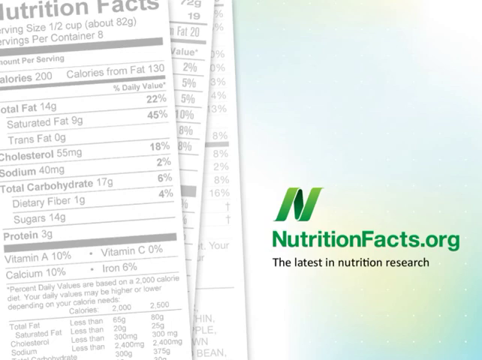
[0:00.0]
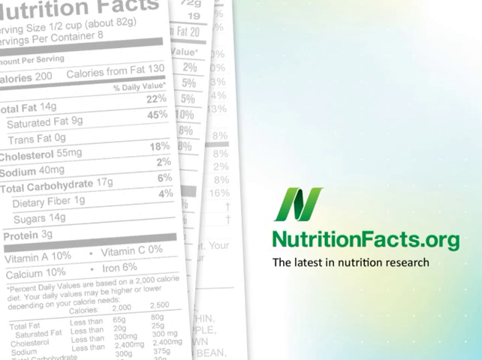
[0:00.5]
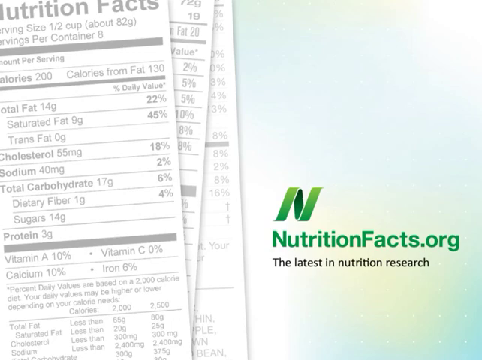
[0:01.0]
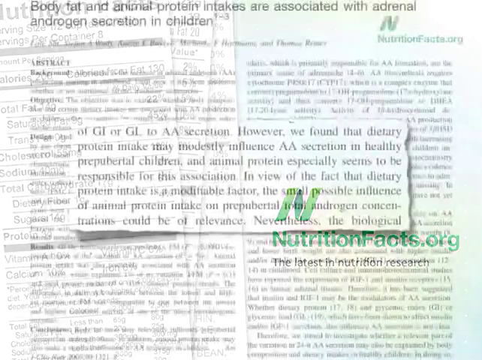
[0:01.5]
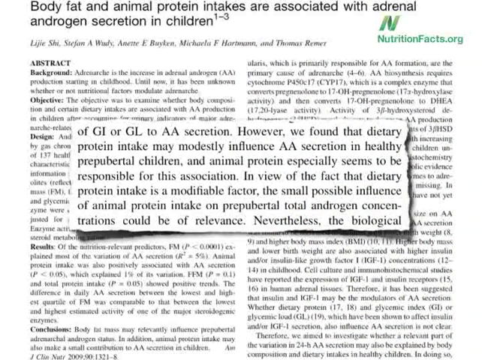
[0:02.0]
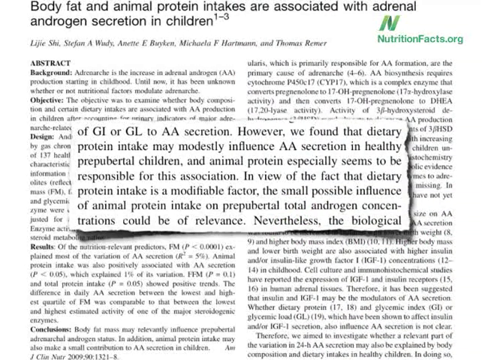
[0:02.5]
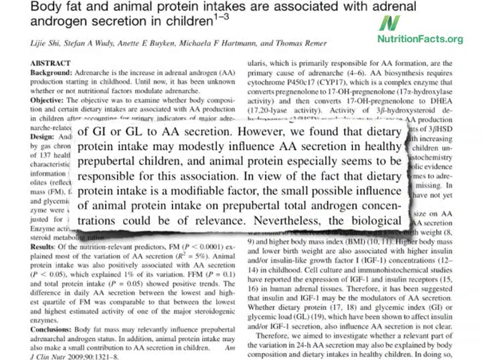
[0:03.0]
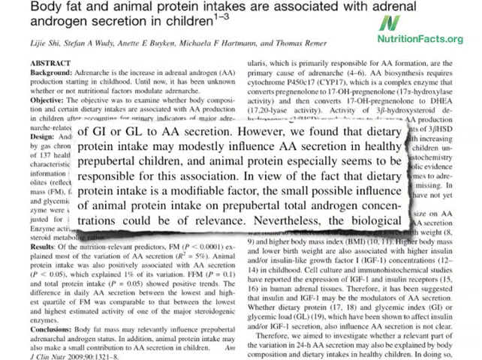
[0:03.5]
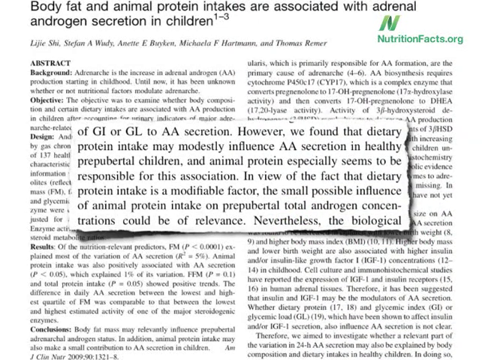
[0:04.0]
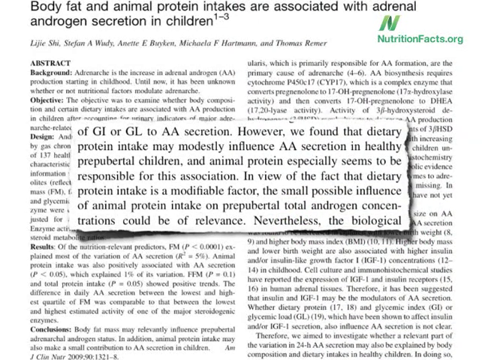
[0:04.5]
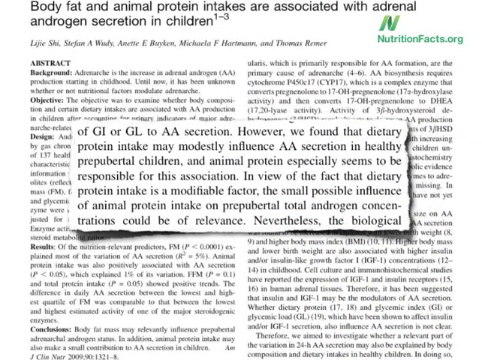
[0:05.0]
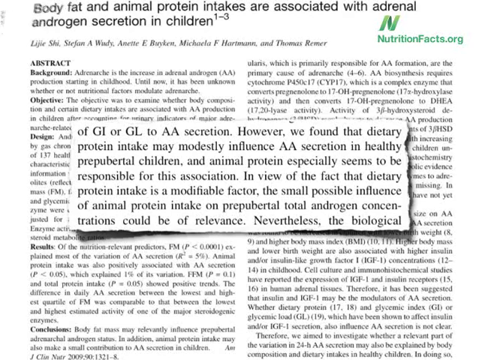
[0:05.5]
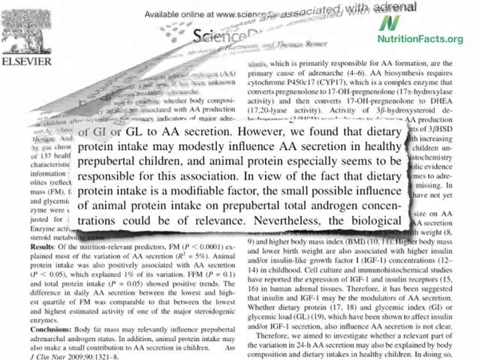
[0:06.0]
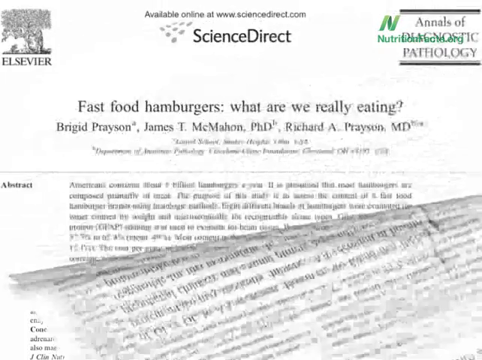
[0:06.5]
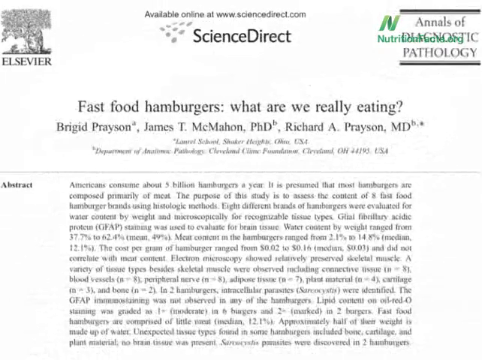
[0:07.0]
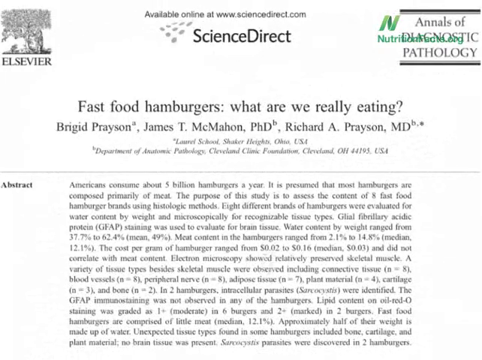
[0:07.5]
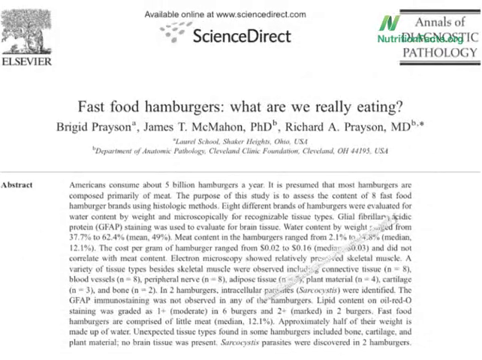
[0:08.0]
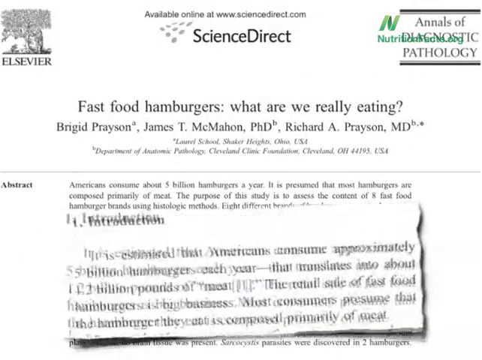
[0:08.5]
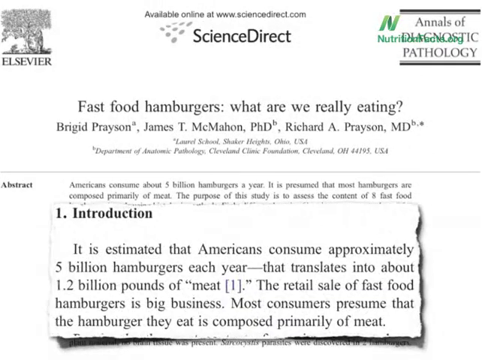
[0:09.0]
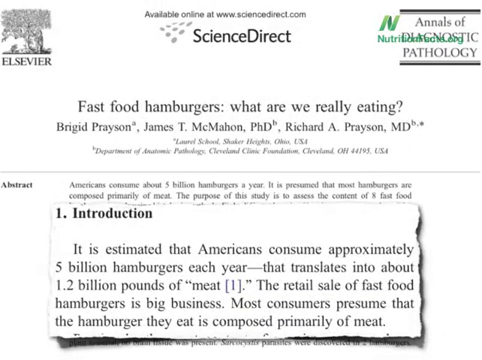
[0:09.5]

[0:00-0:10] A screen shows the URL "nutritionfacts.org" on the right-hand side, with a subtitle below it that says "the latest in nutrition research." On the left-hand side are several examples of nutrition labels. The next screen shows a newspaper column with an excerpt that says, "However, we found that dietary protein intake may modestly influence AA secretion in healthy pre-pubertal children, and animal protein especially seems to be responsible for this association. In view of the fact that dietary protein intake is a modifiable factor, the small possible influence of animal protein intake on pre-pubertal total androgen concentrations could be of relevant importance."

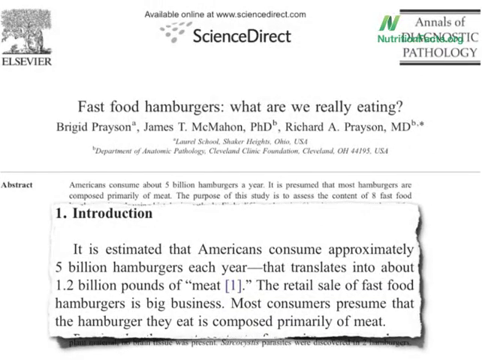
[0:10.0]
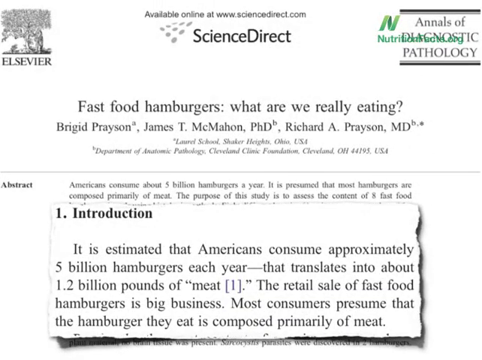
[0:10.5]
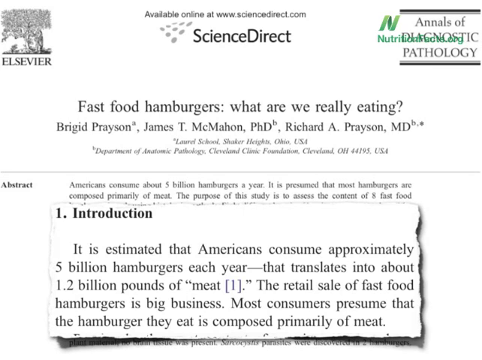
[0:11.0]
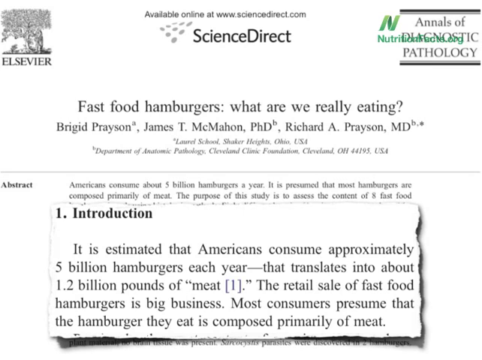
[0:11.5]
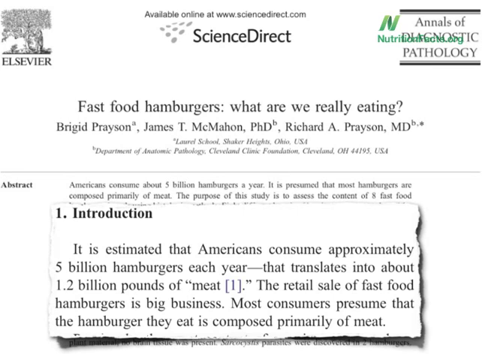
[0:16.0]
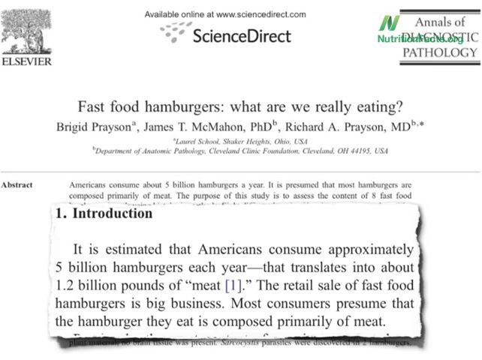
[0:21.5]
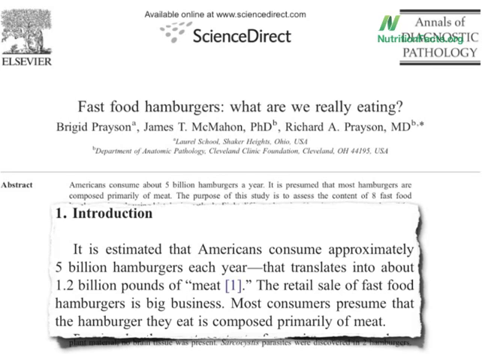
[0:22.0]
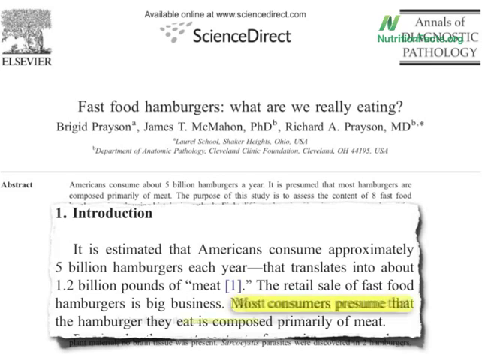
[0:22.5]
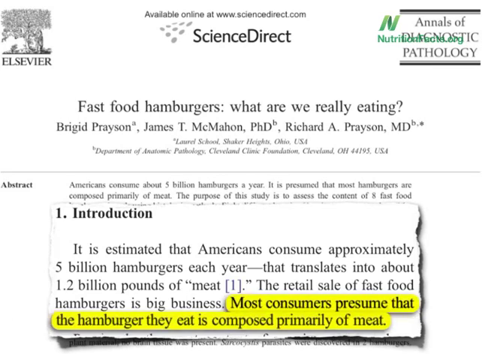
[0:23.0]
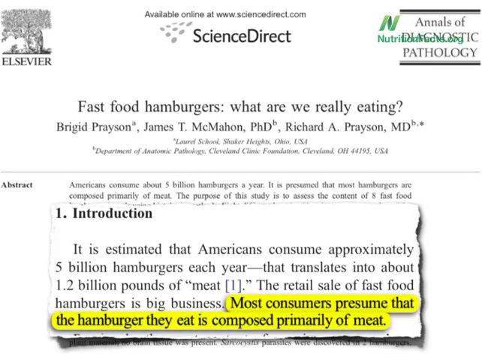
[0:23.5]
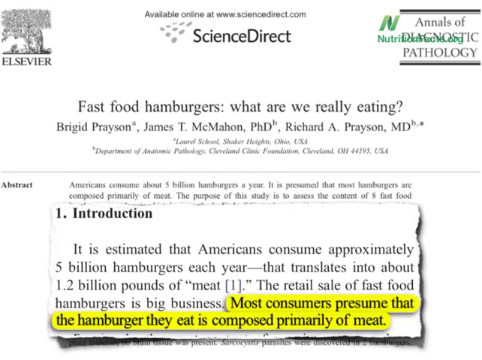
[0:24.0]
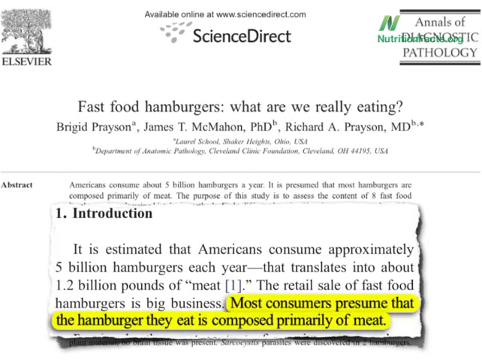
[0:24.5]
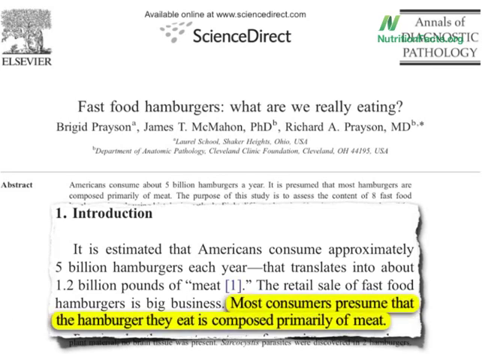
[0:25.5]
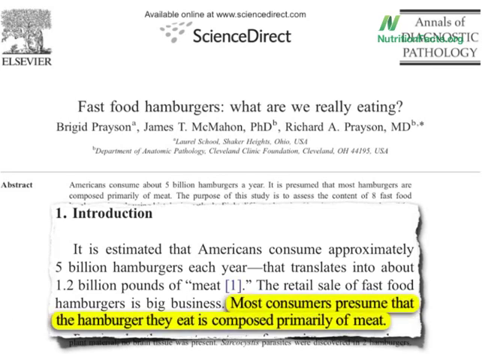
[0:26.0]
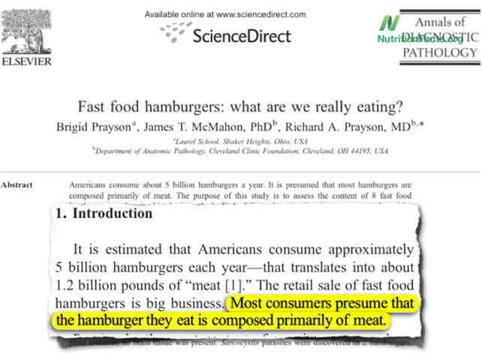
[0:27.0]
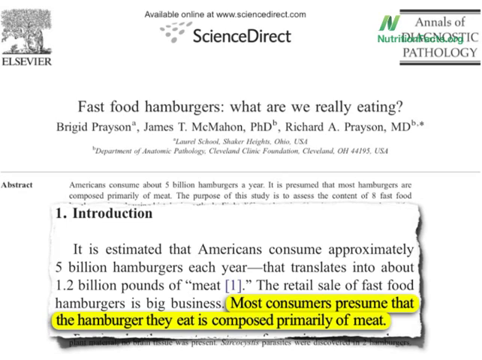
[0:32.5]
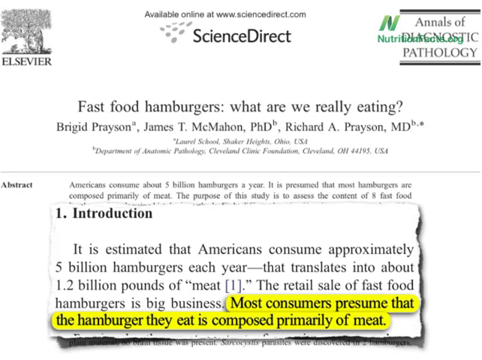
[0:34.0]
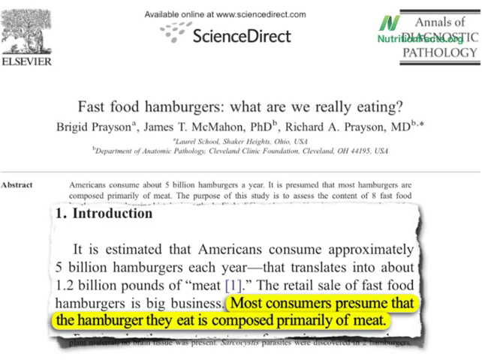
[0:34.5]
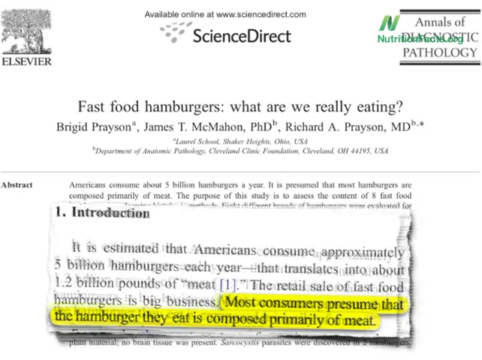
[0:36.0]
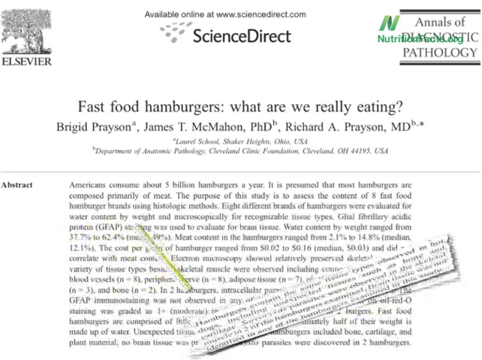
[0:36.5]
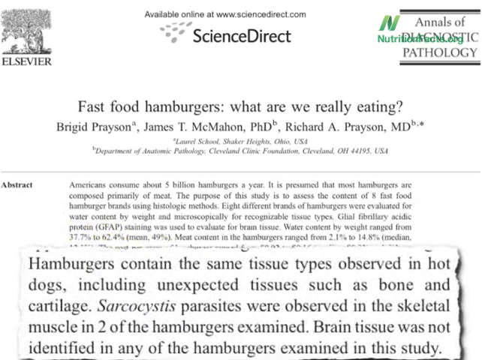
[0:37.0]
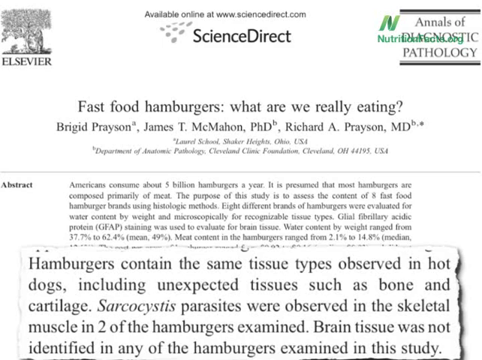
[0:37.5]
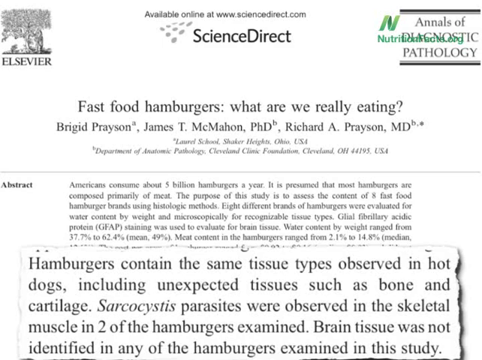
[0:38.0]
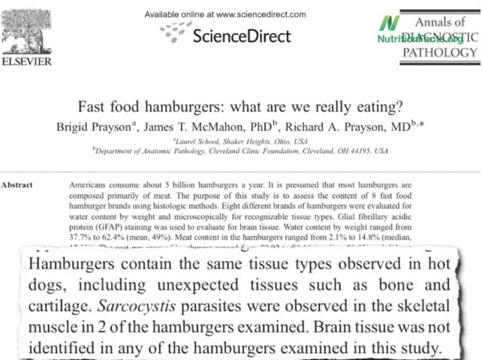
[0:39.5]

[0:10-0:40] A newspaper clipping appears with "Science Direct" at the top, followed by "Fast food hamburgers. What are we really eating? Bridgette Preyssen, James T. McMahon, Ph.D. Richard A. Preyssen, M.D. One. Introduction. It is estimated that Americans consume approximately 5 billion hamburgers each year. That translates into about 1.2 billion pounds of meat. The retail sale of fast food hamburgers is big business. Most consumers presume that the hamburger they eat is comprised primarily of meat." The words are set against a white background and styled as an excerpt from a longer piece of text. The words about most consumers presuming the hamburger is primarily meat are highlighted in yellow, with the highlight appearing in a sort of animated motion. Then the words "hamburgers contain the same tissue types observed in hot dogs, including unexpected tissues such as bone and cartilage" appear.